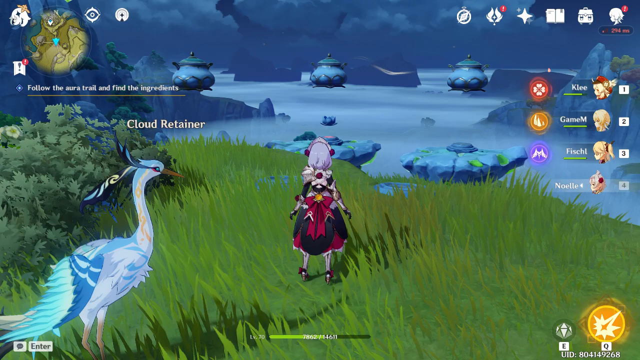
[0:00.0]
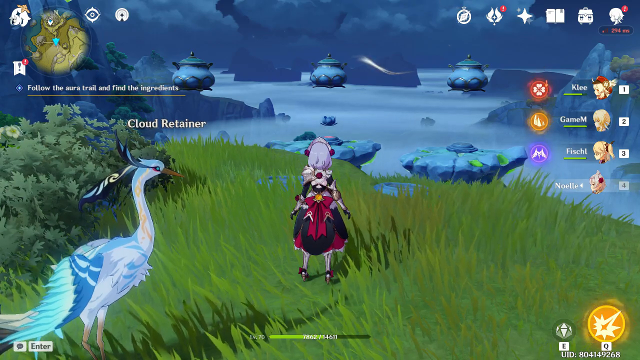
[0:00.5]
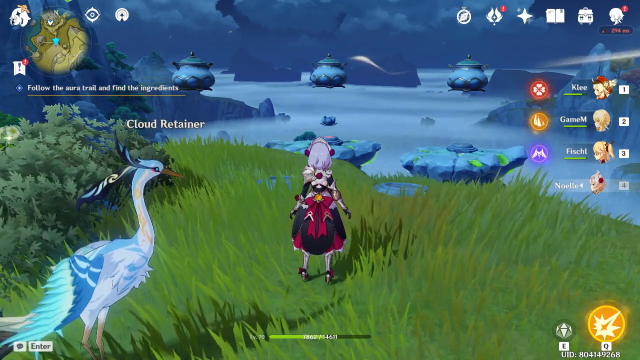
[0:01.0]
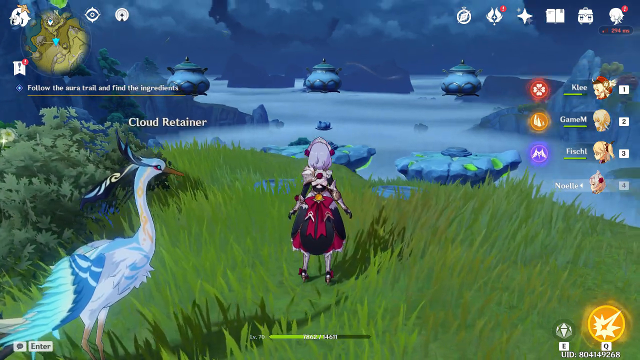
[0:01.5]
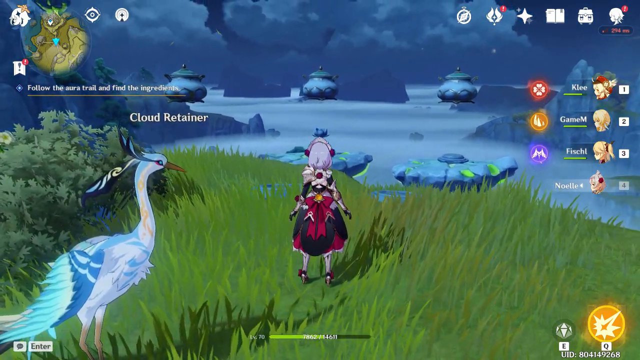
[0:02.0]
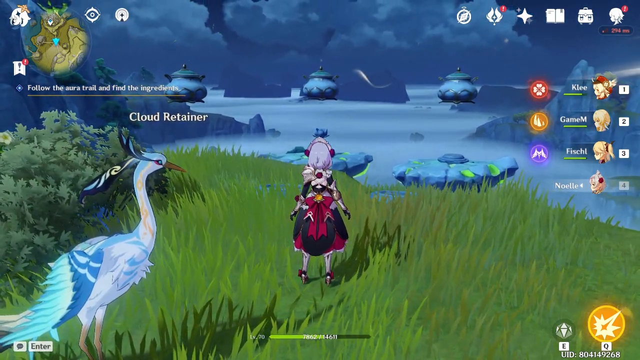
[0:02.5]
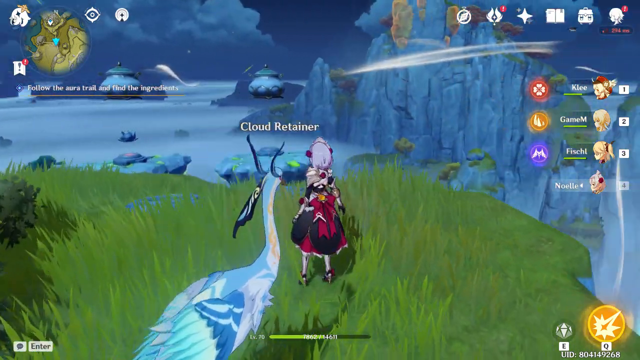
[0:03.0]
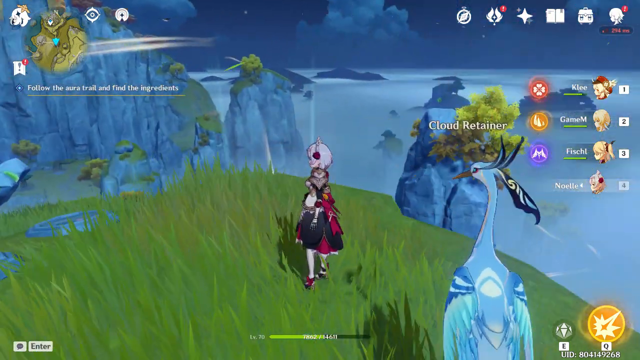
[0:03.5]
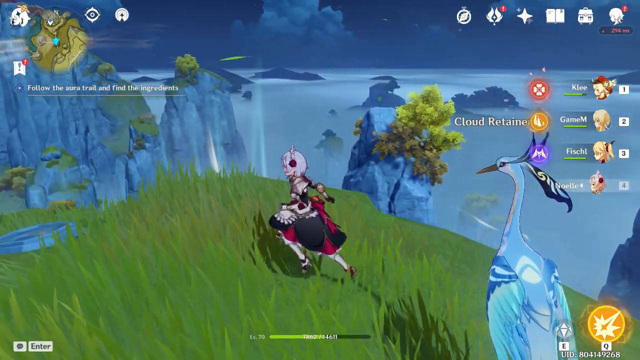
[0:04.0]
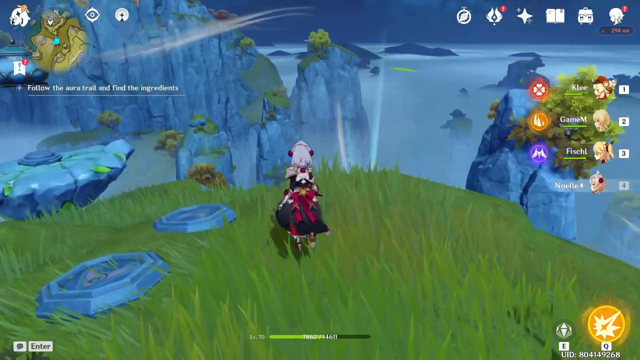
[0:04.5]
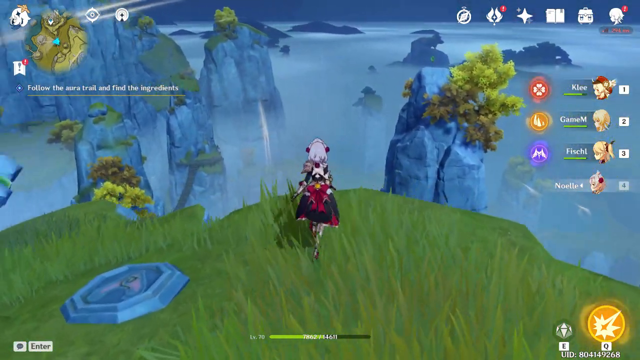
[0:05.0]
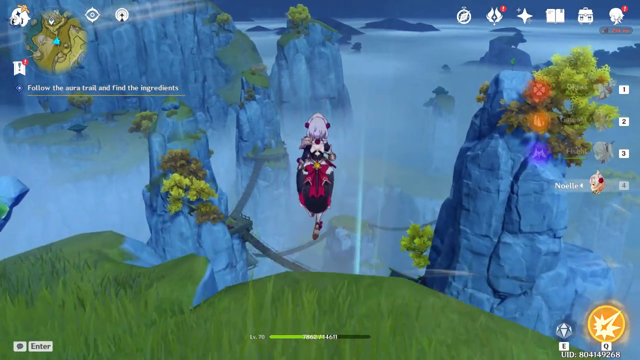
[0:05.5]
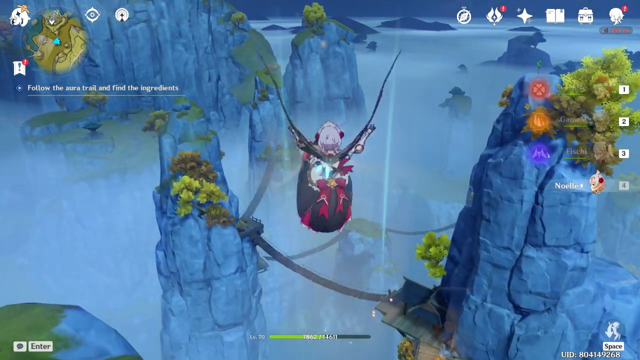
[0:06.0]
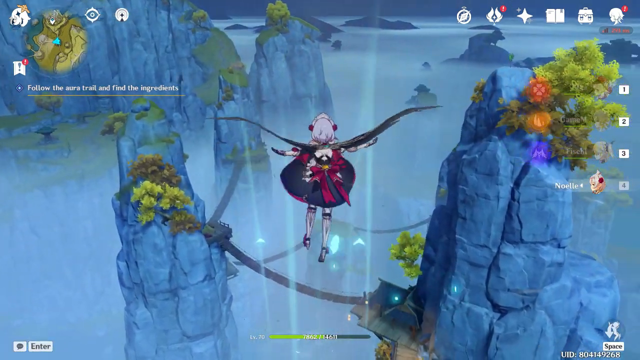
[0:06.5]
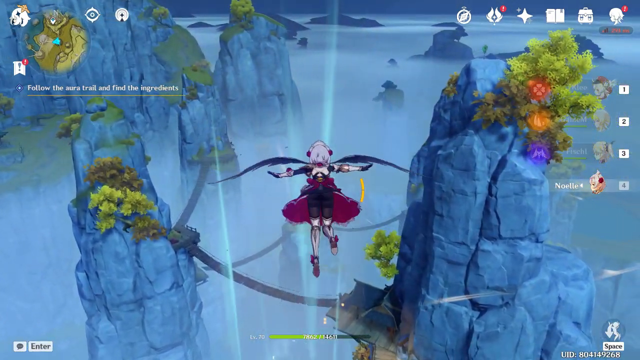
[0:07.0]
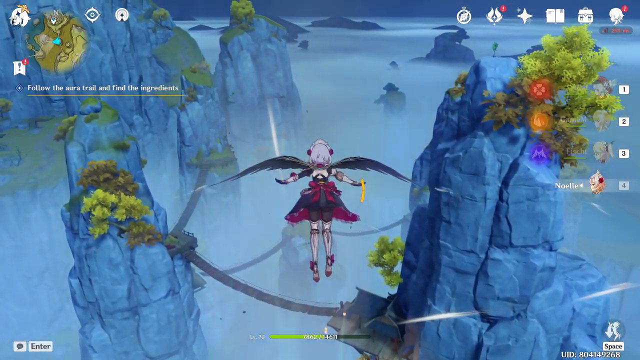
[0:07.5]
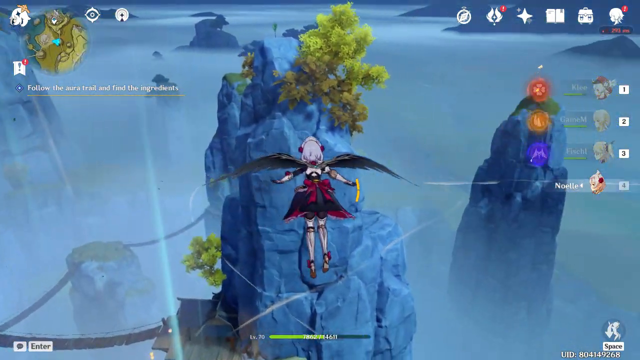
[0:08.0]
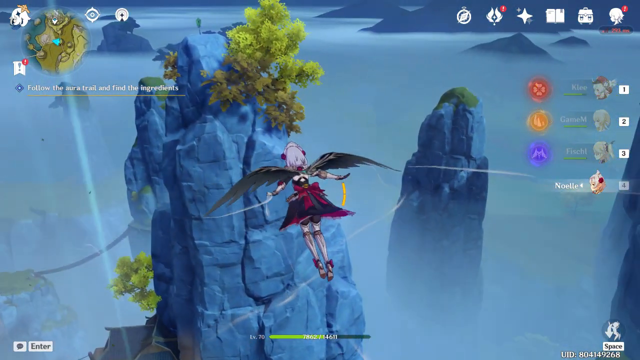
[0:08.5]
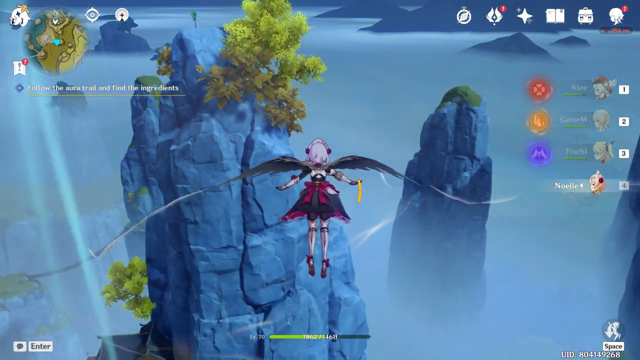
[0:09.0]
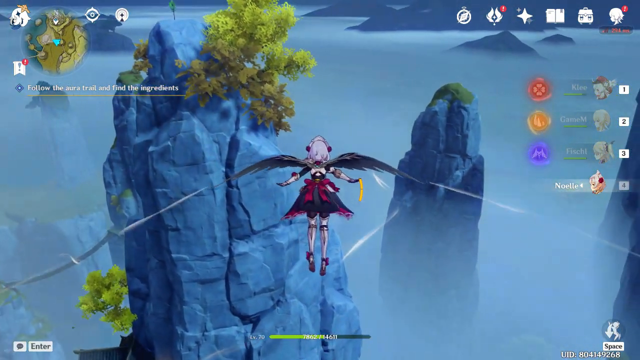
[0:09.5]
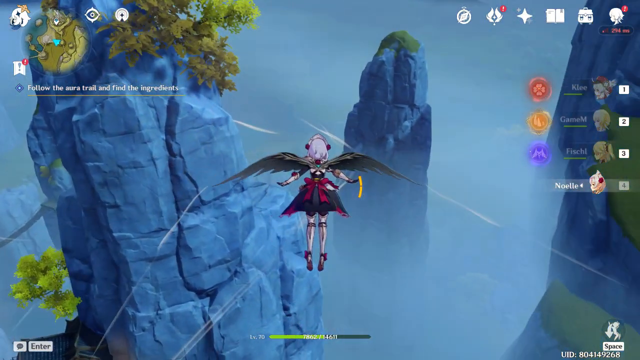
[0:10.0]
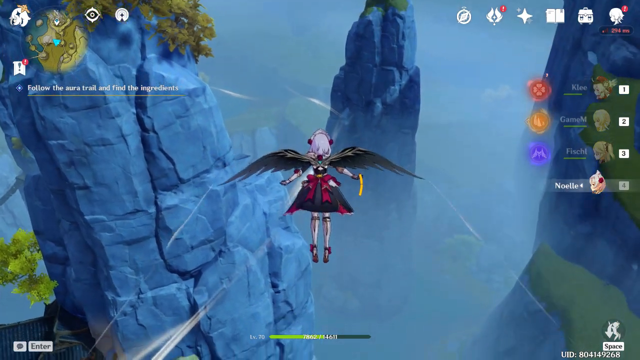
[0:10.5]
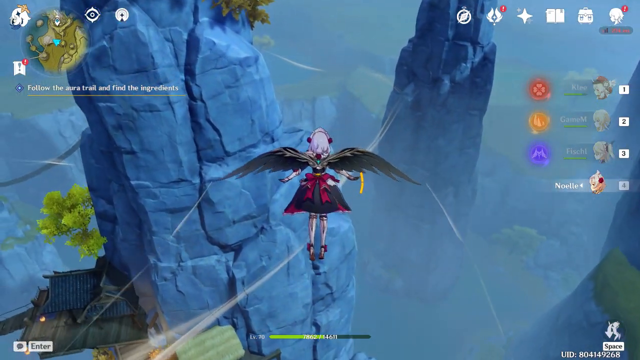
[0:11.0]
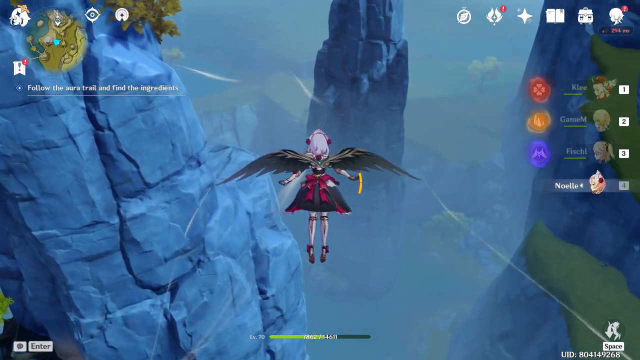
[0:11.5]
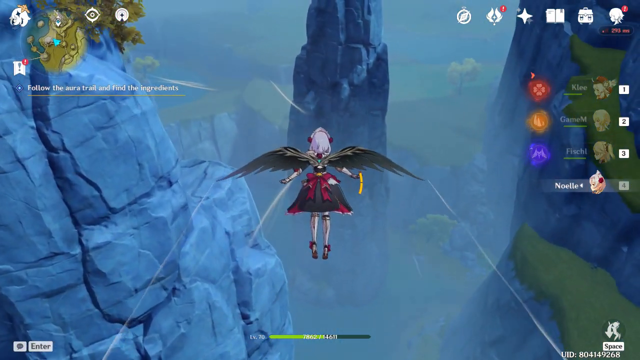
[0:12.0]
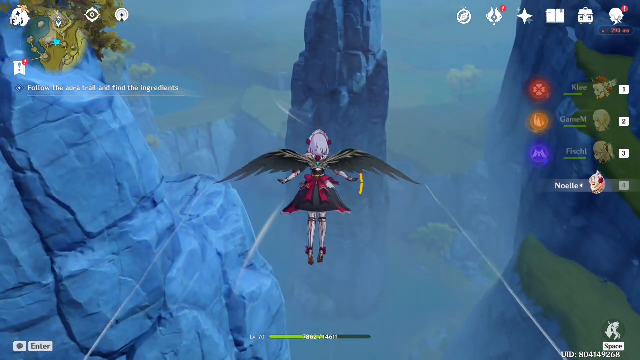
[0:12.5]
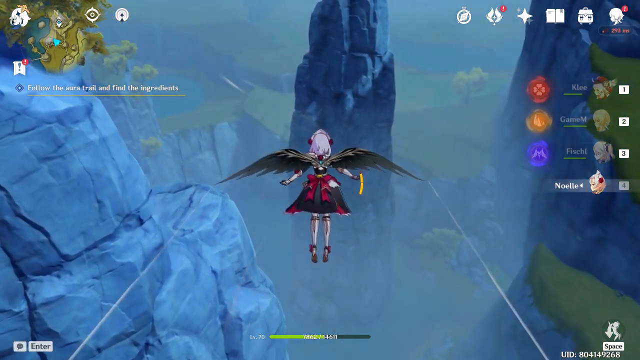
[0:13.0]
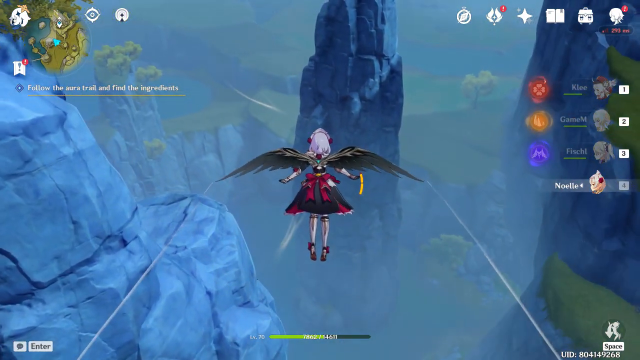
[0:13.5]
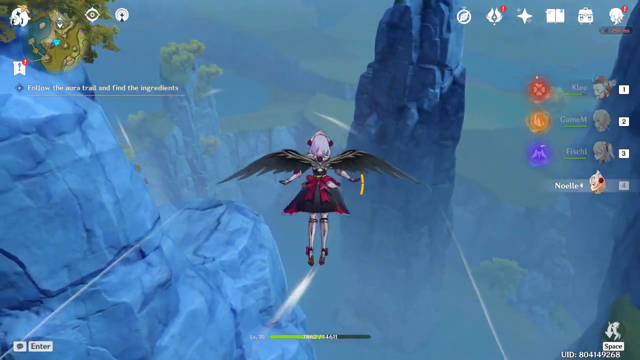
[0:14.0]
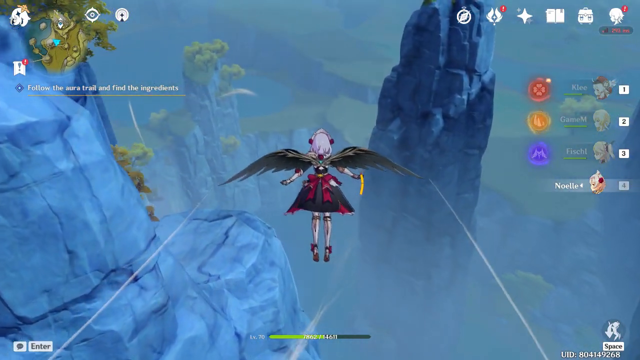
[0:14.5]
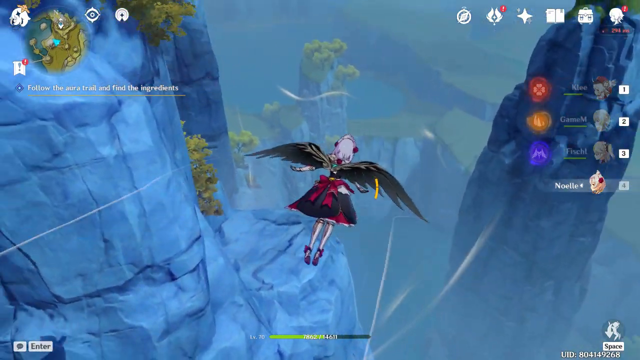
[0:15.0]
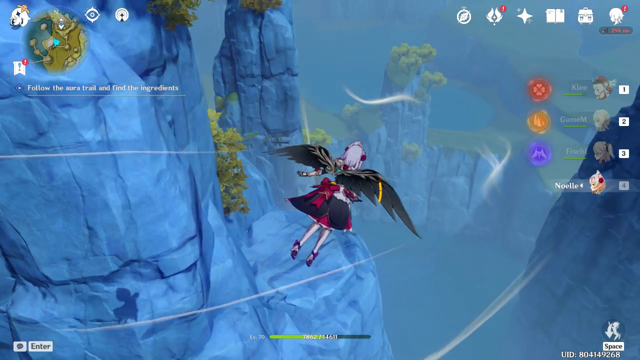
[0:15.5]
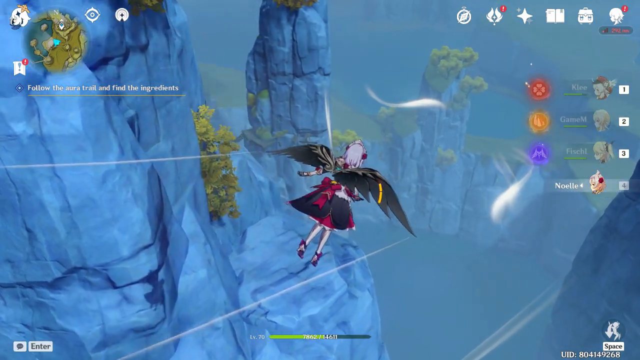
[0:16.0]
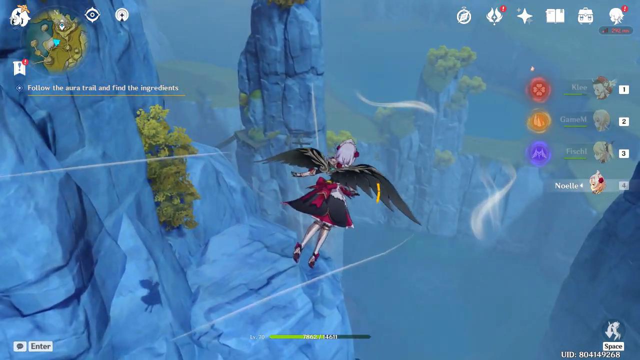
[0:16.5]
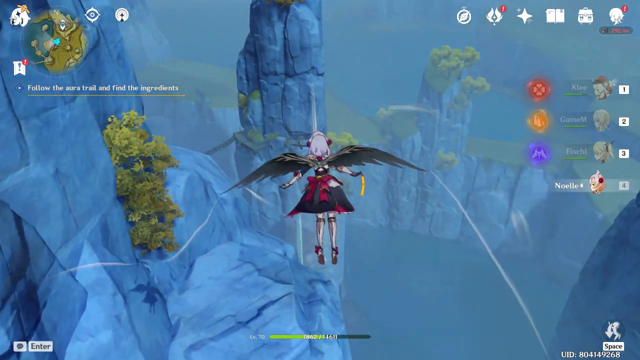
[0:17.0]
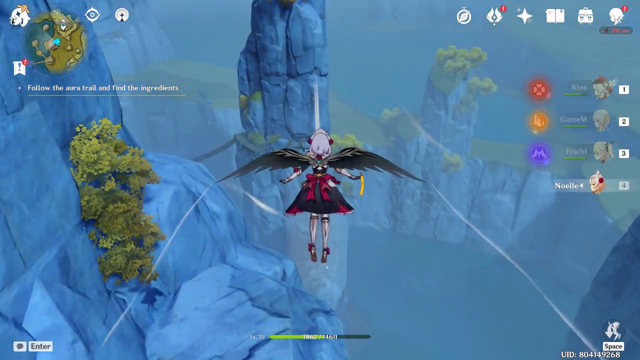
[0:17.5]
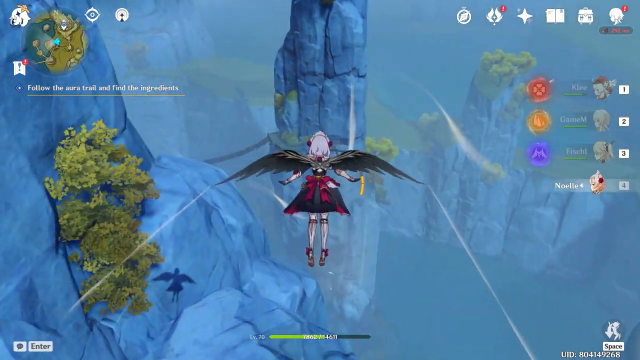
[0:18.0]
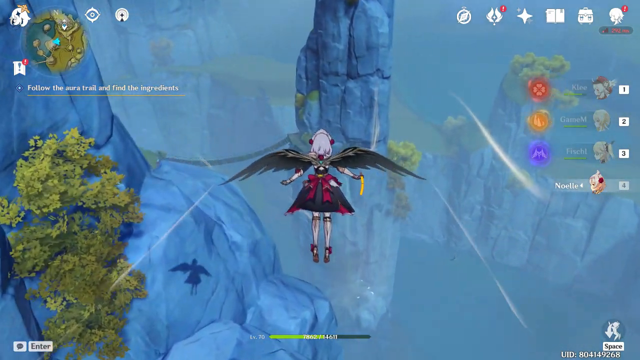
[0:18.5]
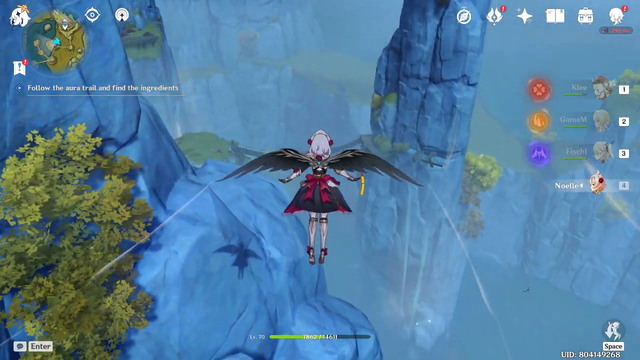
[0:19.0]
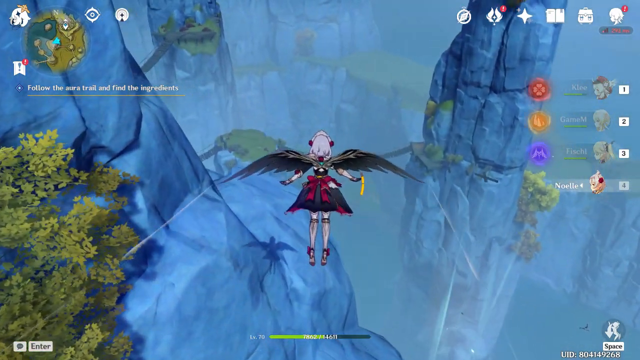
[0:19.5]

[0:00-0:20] An RPG game features an anime-type character with white hair and red earmuffs, wearing a black and red schoolgirl-type dress, with bows on her ankles. She is shown from behind. At the beginning there is a bird that looks like an anime kind of stork; it is white, about as big as she is, and has two blue feathers coming from its eyes. She stands off to the left-hand side in a patch of tall grass that comes up past her skirt. She jumps from a cliff and, with her black wings, flies and glides through the sky, landing on another high, very steep rock cliff. Around her are the rock cliffs and trees with kind of light green foliage. In the distance there seem to be some teacups.